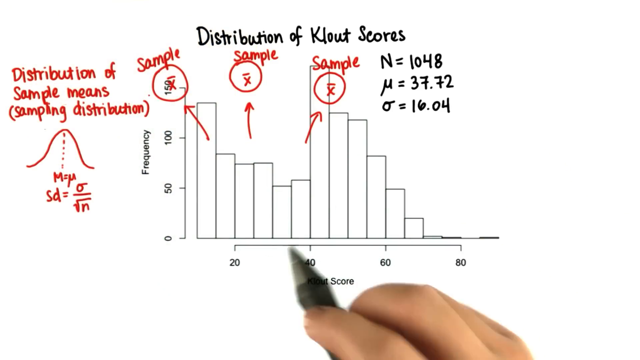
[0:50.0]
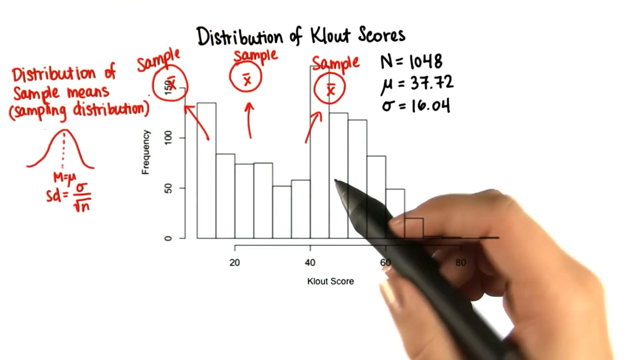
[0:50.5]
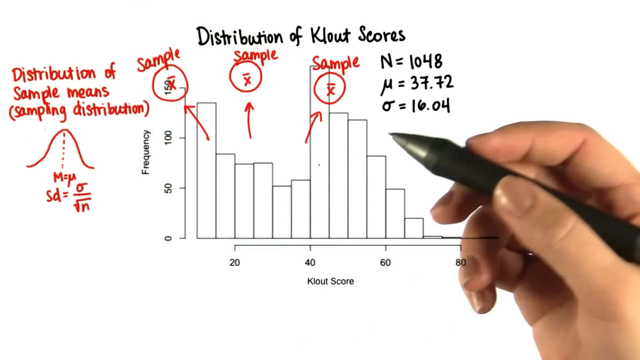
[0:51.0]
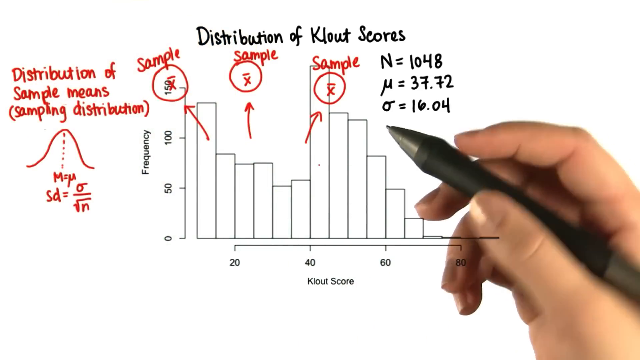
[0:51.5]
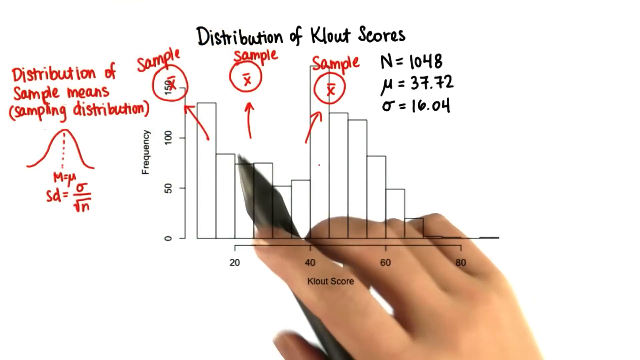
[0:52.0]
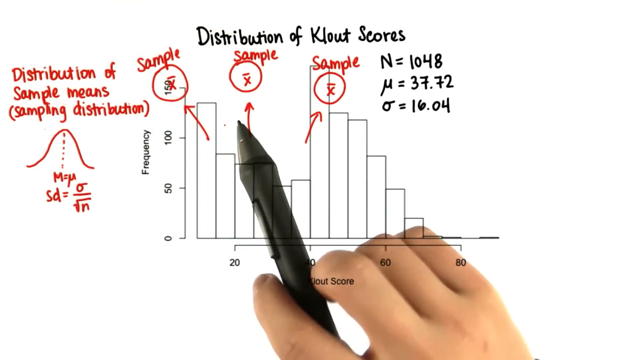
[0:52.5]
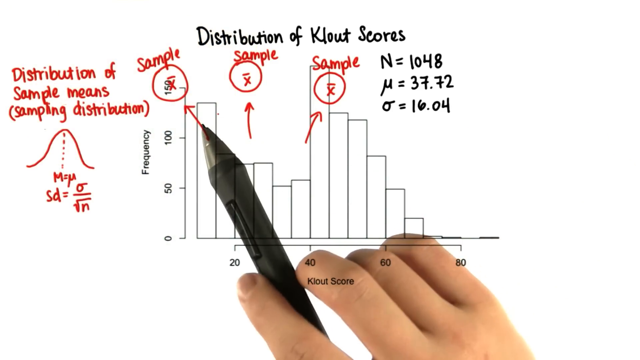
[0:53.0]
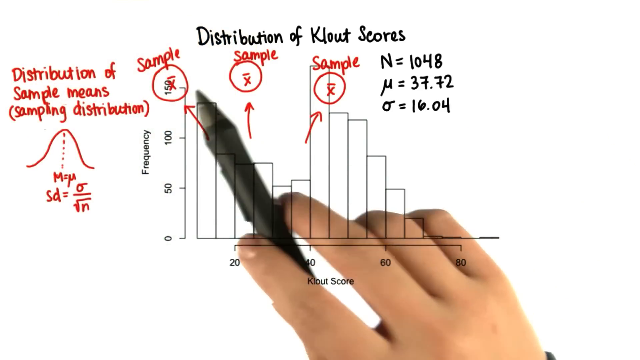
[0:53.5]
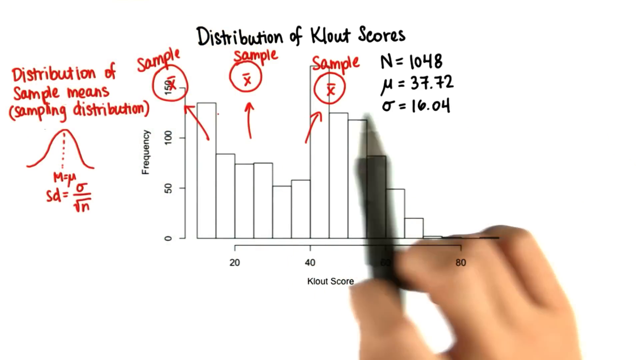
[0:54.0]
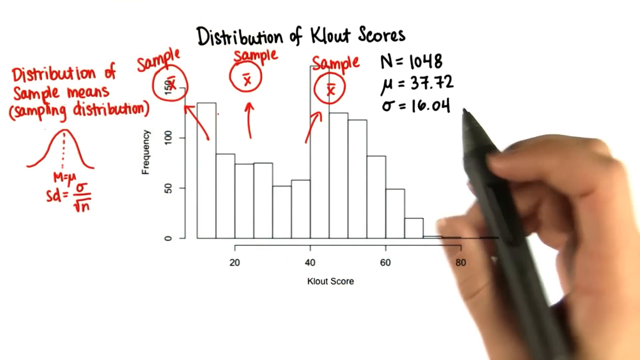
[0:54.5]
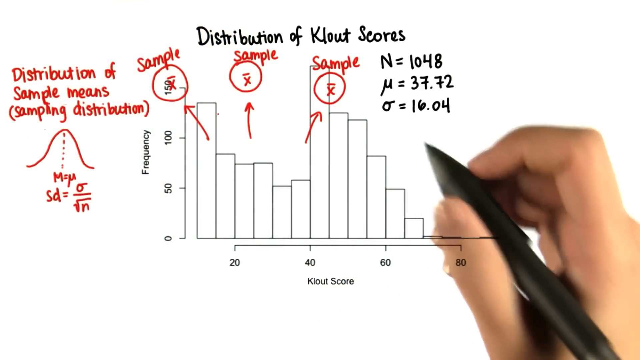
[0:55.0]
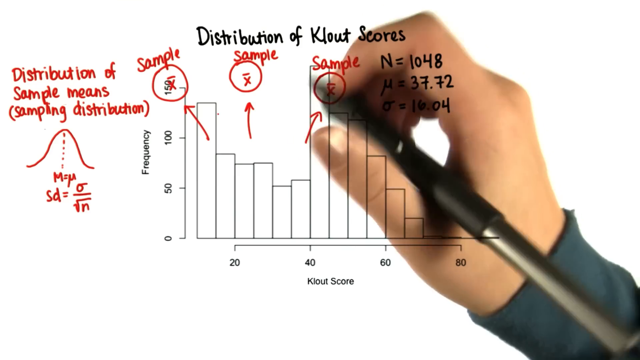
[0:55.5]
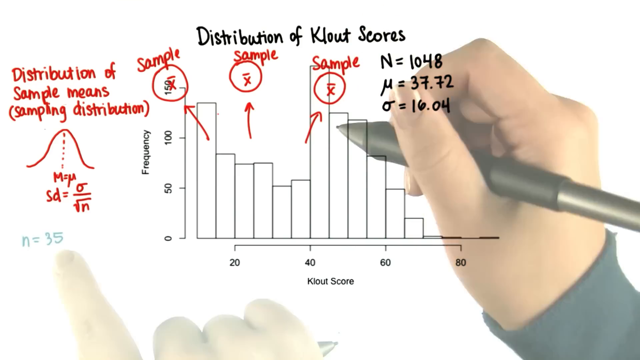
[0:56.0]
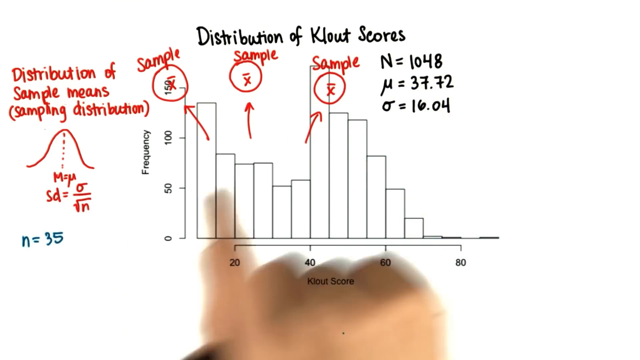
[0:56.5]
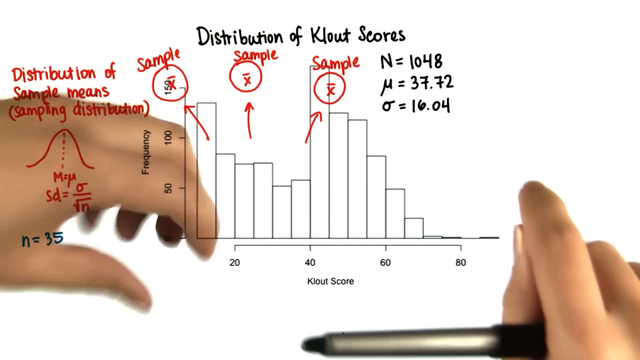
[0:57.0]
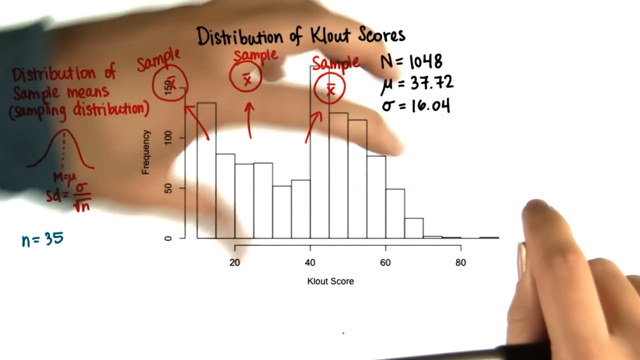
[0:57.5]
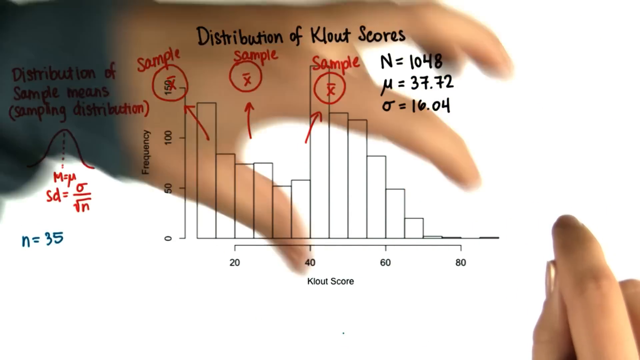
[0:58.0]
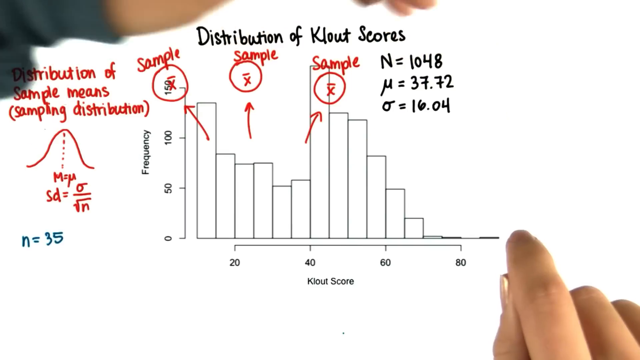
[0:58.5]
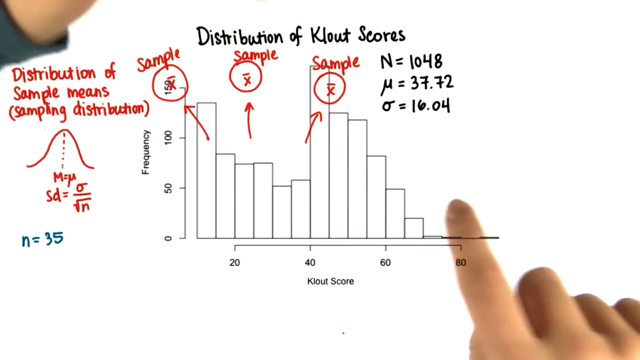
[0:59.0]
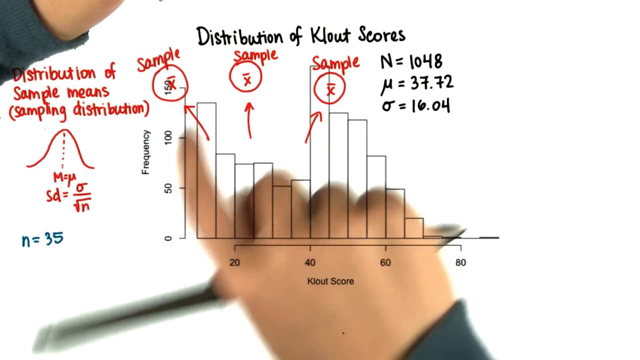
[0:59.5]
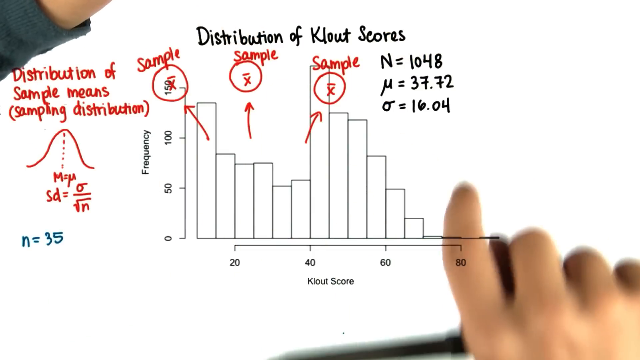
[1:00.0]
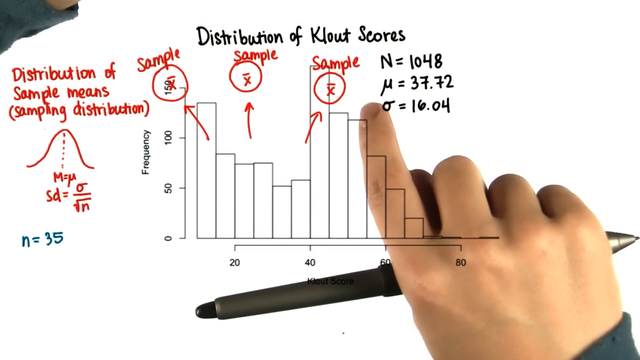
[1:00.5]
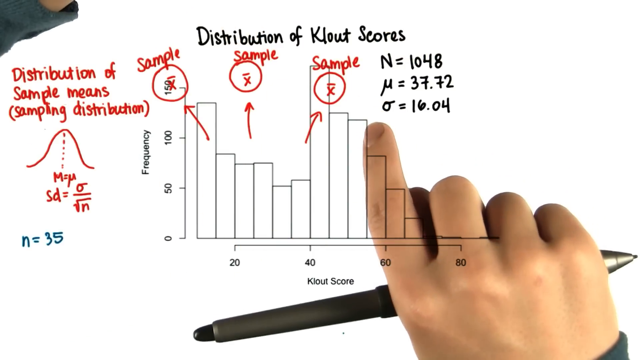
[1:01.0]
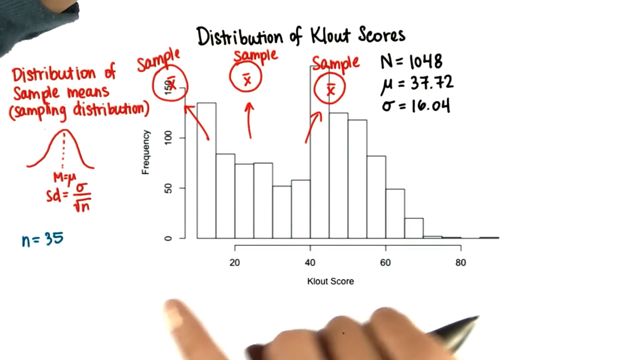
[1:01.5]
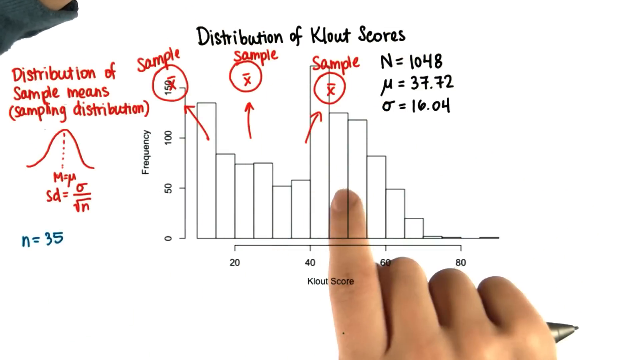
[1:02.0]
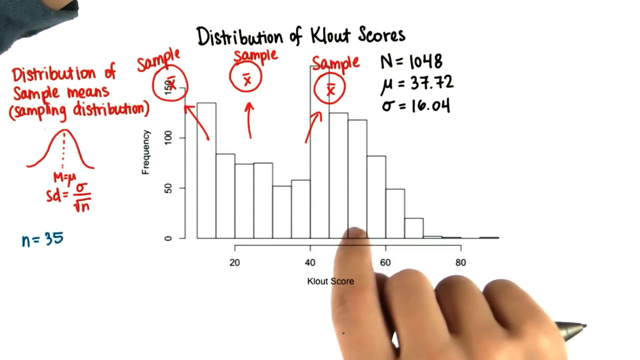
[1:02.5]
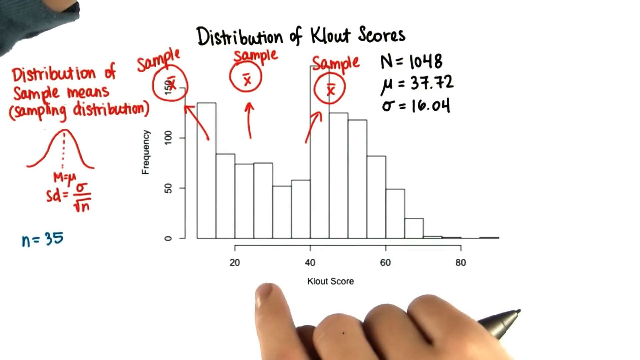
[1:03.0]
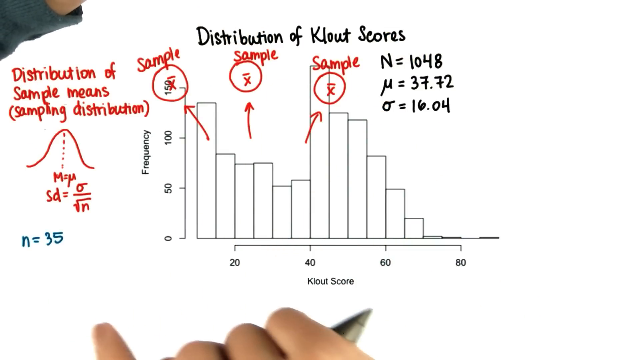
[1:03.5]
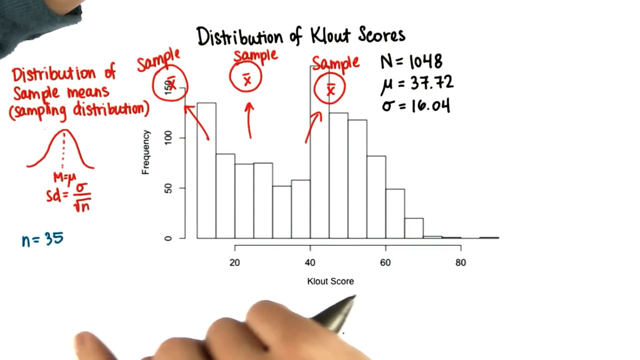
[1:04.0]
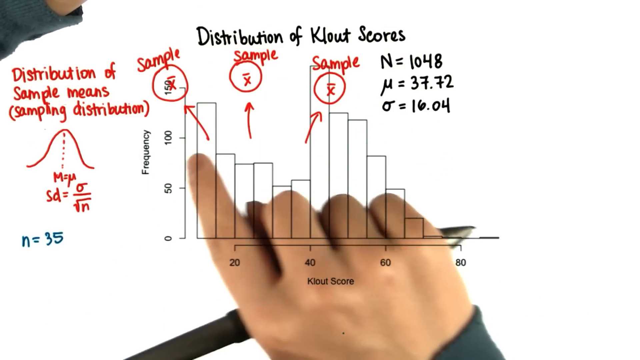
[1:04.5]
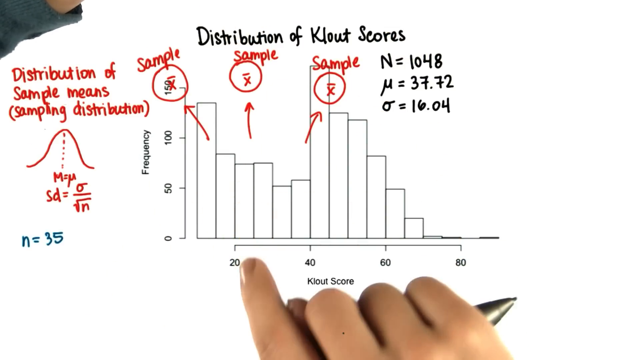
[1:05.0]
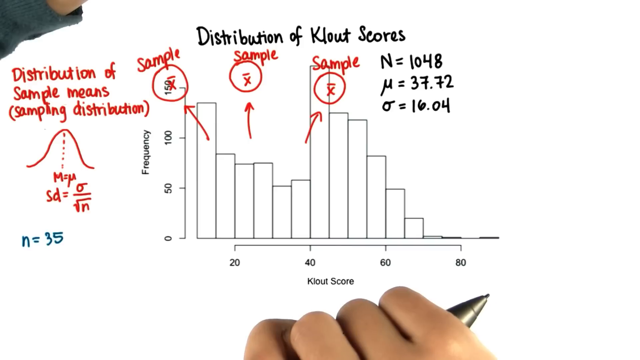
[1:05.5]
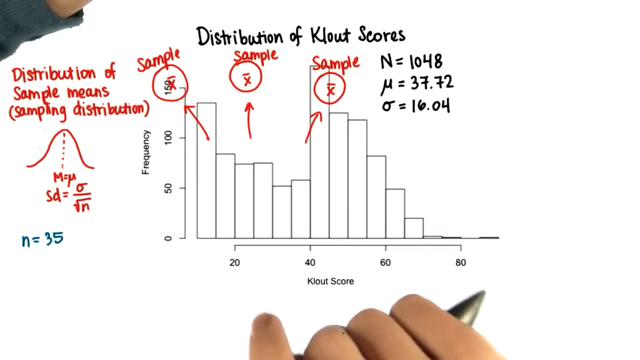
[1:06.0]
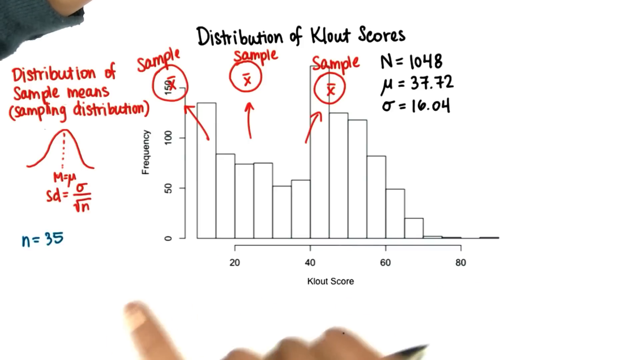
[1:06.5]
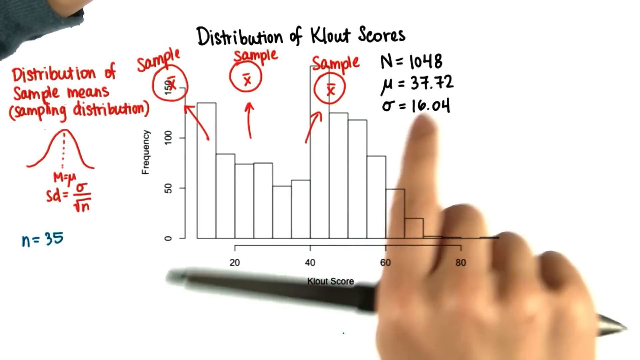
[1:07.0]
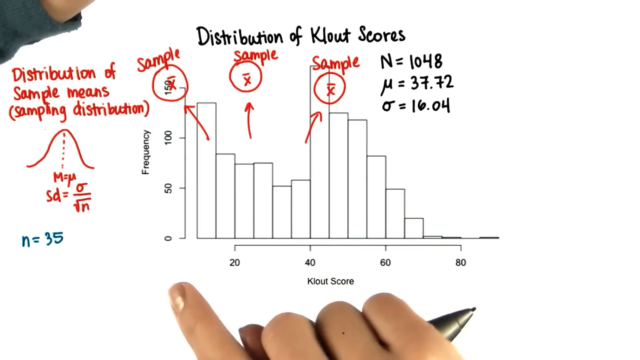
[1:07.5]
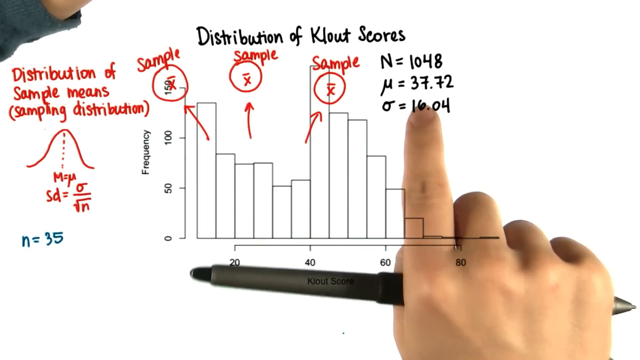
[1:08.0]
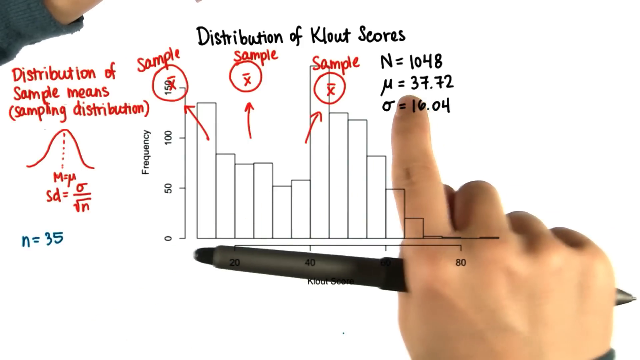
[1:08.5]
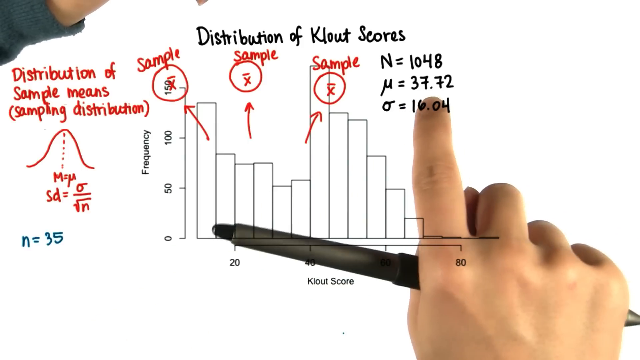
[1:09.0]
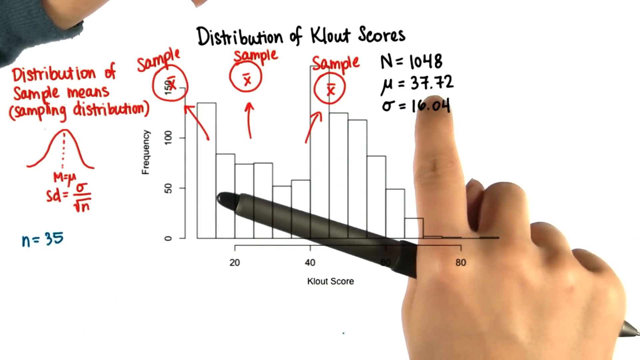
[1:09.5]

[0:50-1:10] The same graph titled "distribution of clout scores" is shown, with frequency on the vertical axis from 0 to 150 in increments of 50 and clout score on the horizontal axis from 20 to 80 in increments of 20, and bars of varying lengths. The writing "n = 1048," a strange u "= 3772," and an O with a line to the right "= 1604" is still there. The red sample arrows point left, center and right, each to a circle labeled "sample" containing an x with a line over it. To the very right, in red, are "distribution of sample means," the sample distribution bell graph with a line going down and some word starting with m, and "sd =" an O with a line divided by the square root of n. She makes unclear hand movements, holding the pen in different ways and moving around without writing anything. Using both hands, she makes a claw motion, draws a circle with her left pointer finger, traces shapes with a finger of her right hand and points at things; she seems to be trying to indicate something, but it is unclear how it relates to what is written.